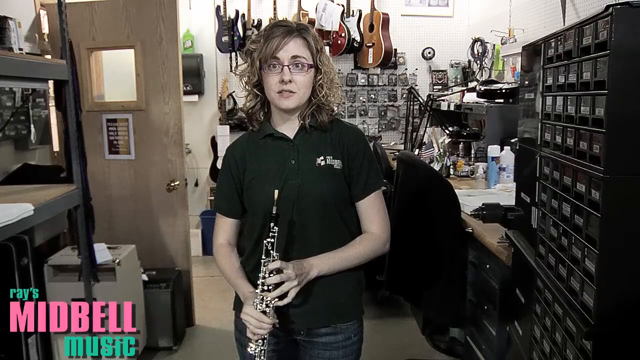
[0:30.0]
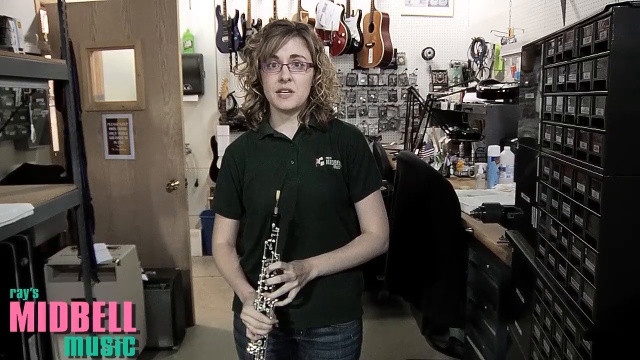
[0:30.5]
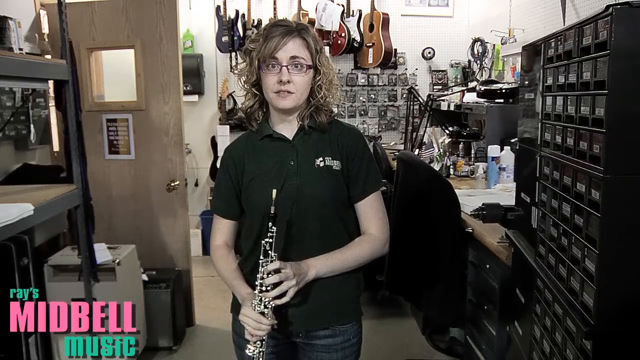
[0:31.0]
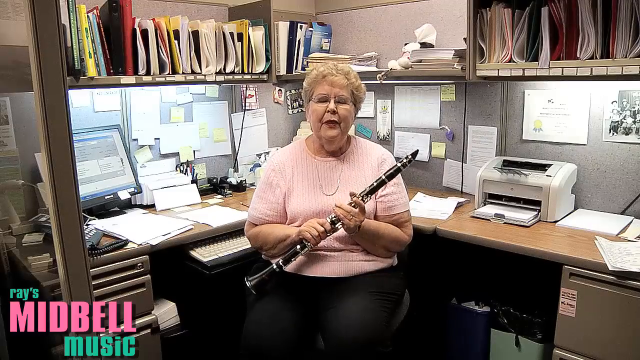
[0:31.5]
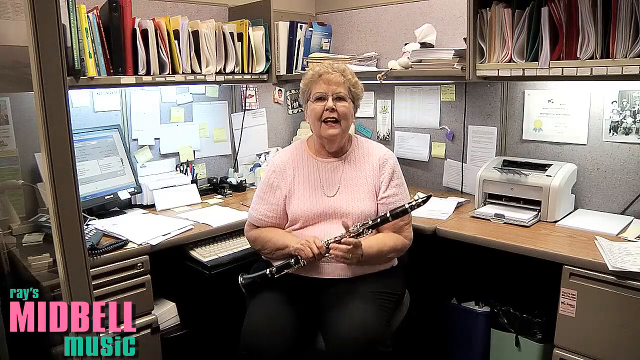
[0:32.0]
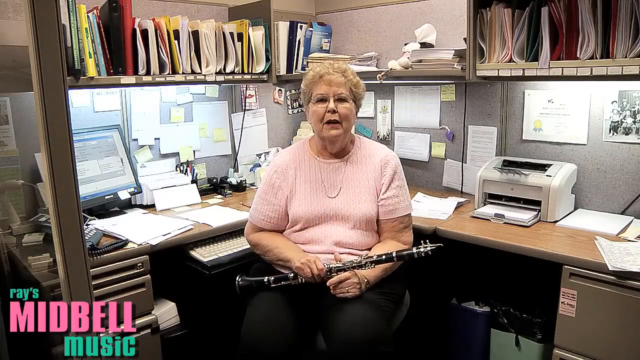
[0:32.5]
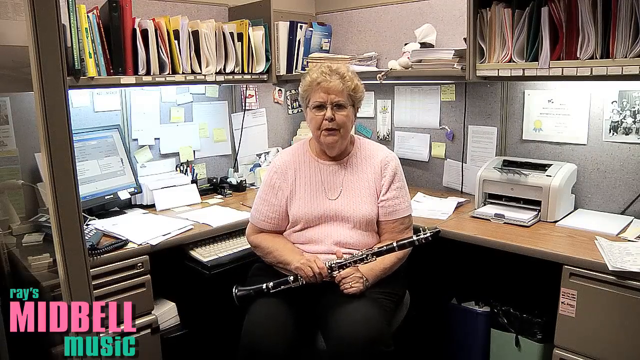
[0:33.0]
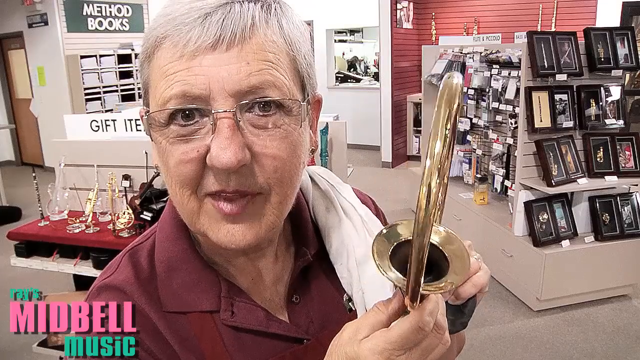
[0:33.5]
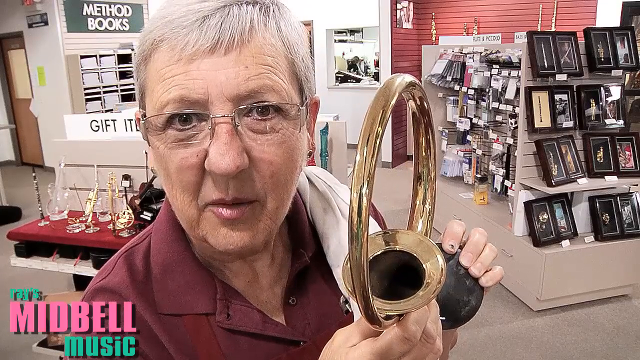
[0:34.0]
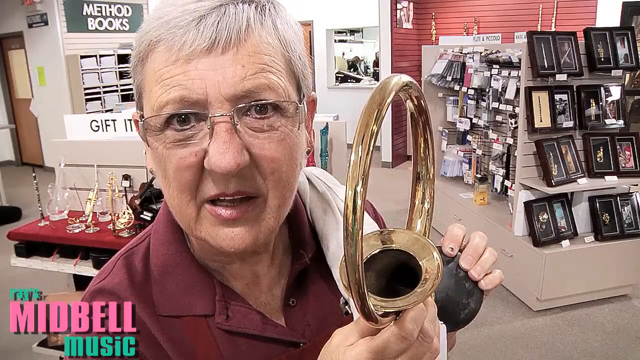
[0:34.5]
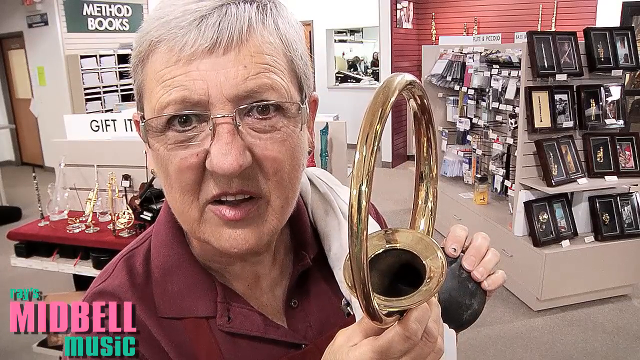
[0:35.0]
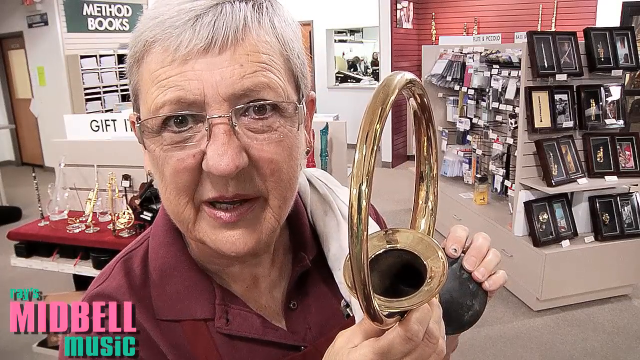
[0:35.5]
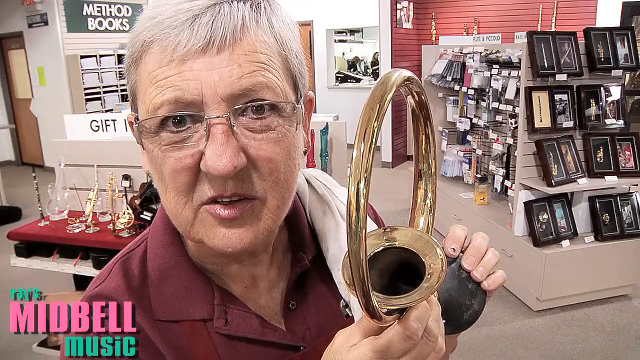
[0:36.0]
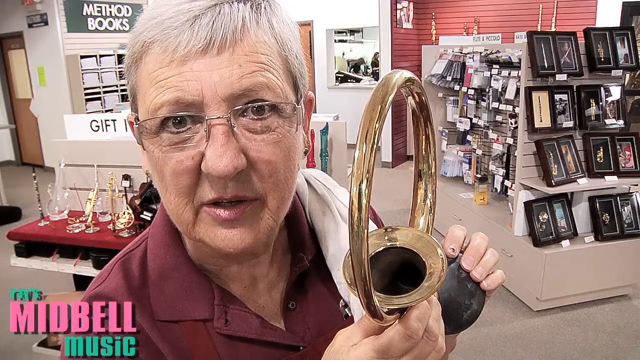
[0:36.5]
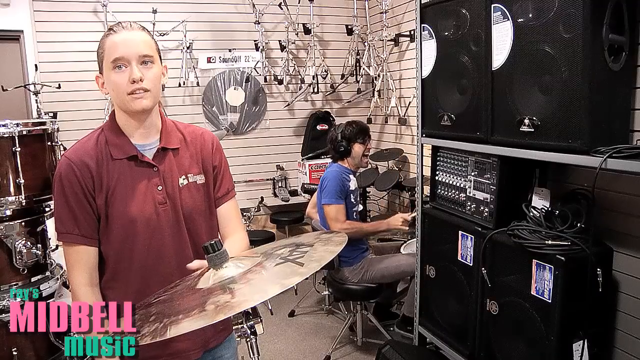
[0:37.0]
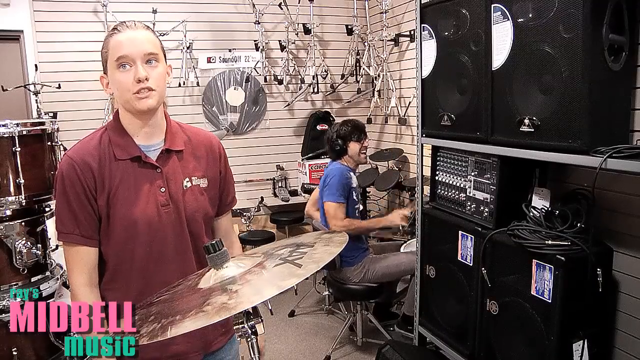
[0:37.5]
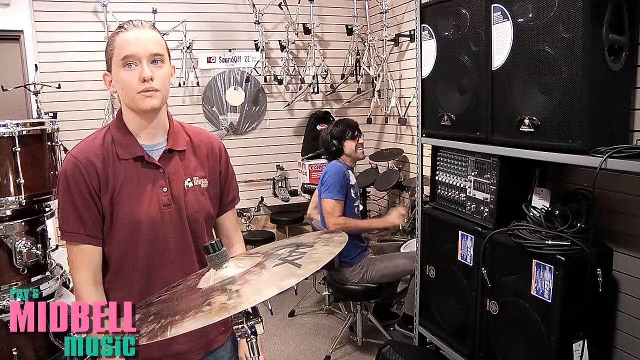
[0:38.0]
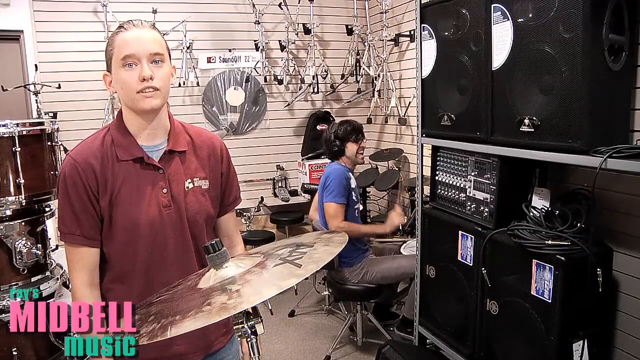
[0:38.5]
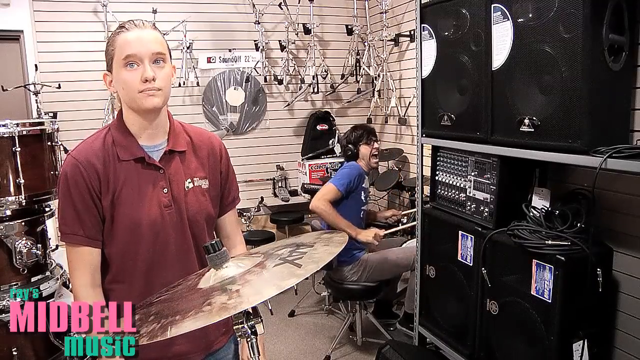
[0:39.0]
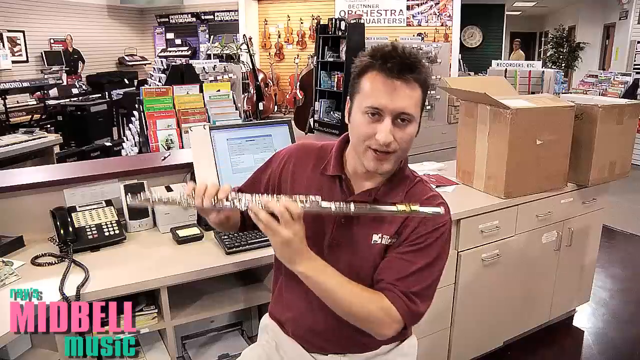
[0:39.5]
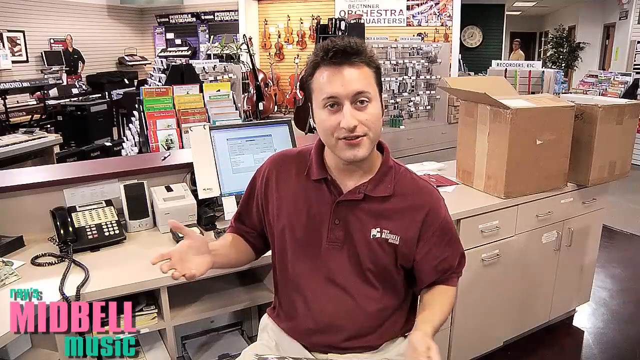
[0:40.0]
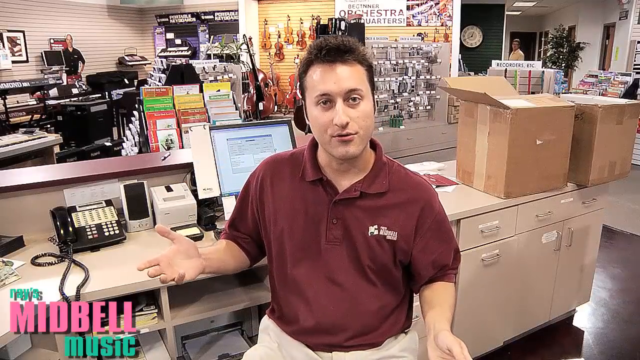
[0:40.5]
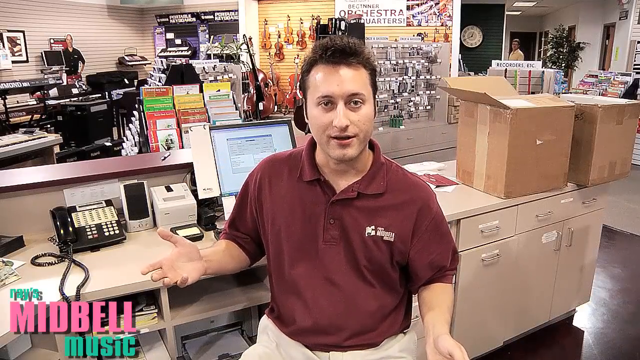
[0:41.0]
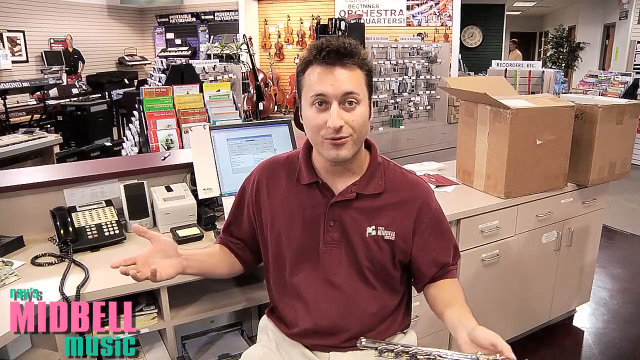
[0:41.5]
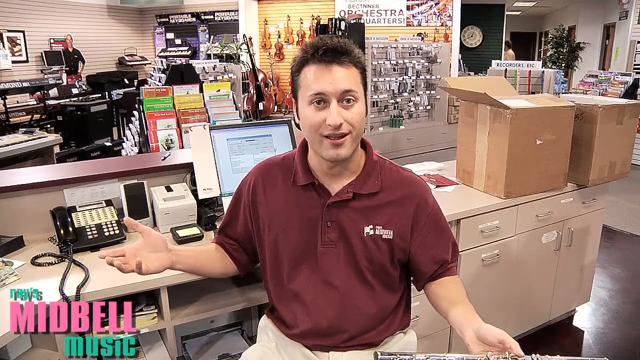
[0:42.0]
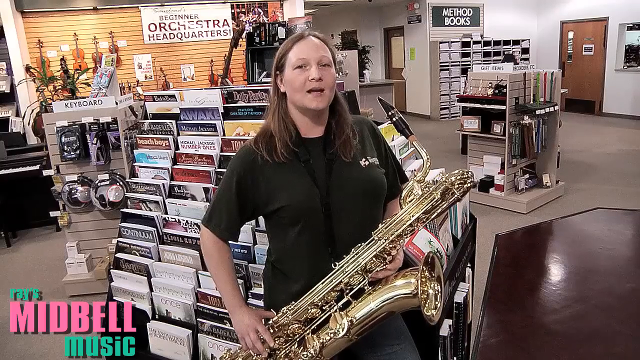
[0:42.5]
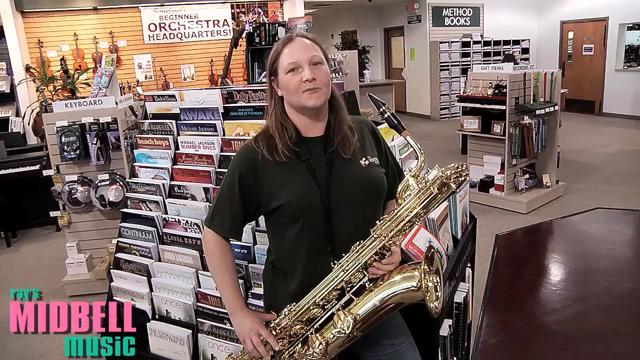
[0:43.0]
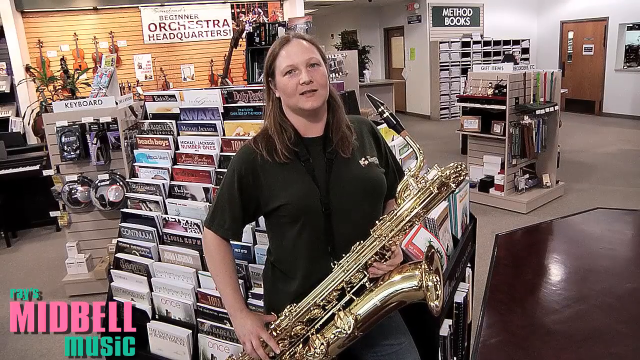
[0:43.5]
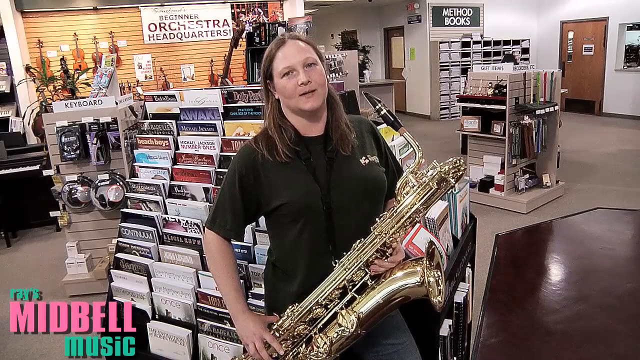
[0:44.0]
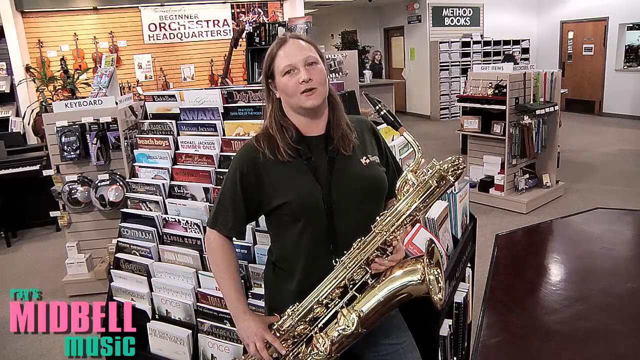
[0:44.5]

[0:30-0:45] The one-on-one interviews apparently continue with Midbell store employees and possibly customers talking about their instruments. A woman sitting at her desk holds a flute or clarinet of some type and looks to be an employee. An up-close shot shows an older woman holding some kind of horn. The video cuts to a woman at a drum set, with somebody rocking out on the drum set in the background. Next, what looks to be a store employee behind the desk holds a flute and explains something to the camera, and the sequence ends with a woman holding a saxophone, also talking into the camera. There appear to be about six different scenes, seemingly all within the same Midbell store. A logo at the bottom apparently reads "Raise MidBell Music".